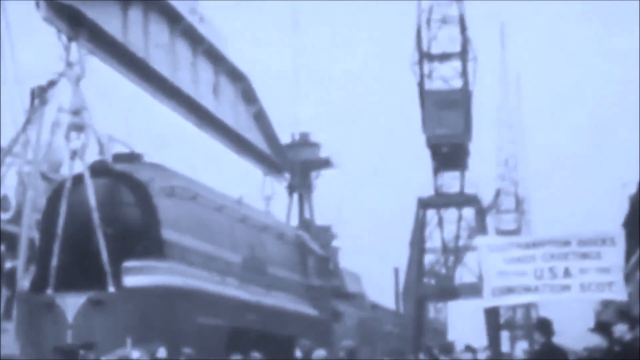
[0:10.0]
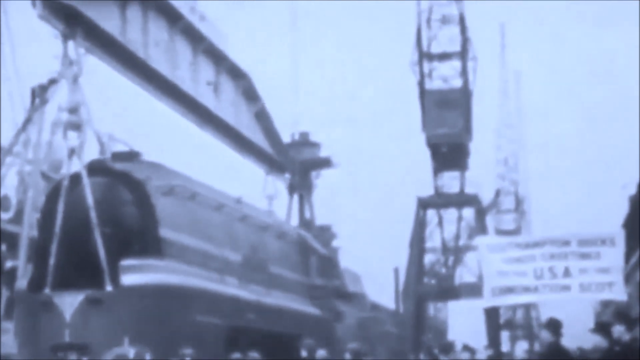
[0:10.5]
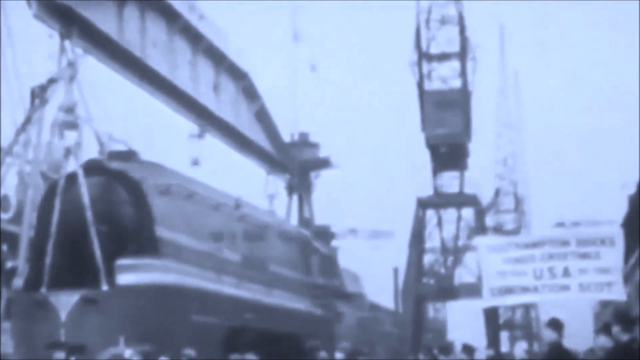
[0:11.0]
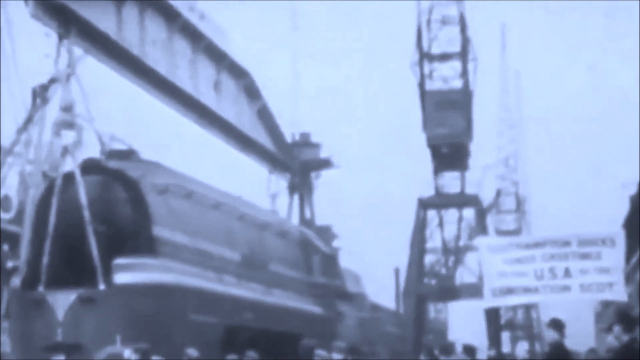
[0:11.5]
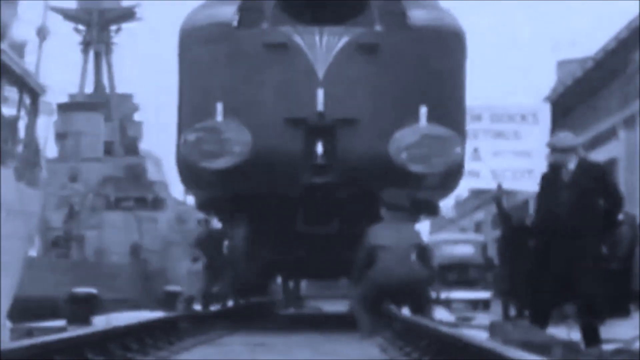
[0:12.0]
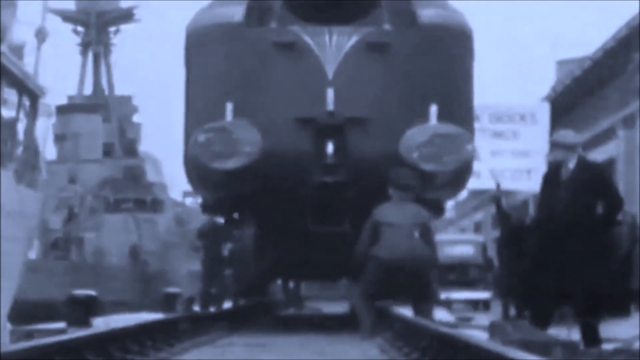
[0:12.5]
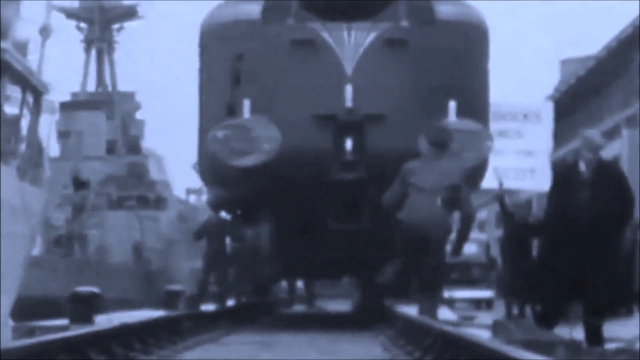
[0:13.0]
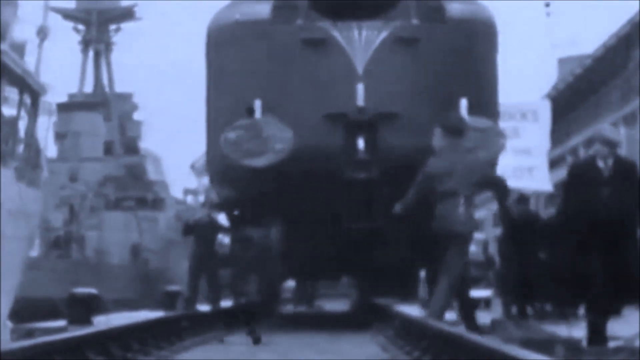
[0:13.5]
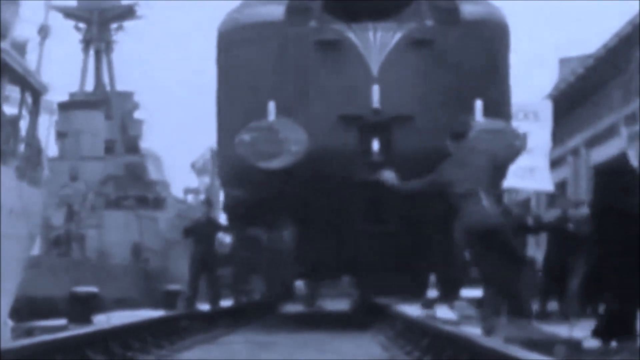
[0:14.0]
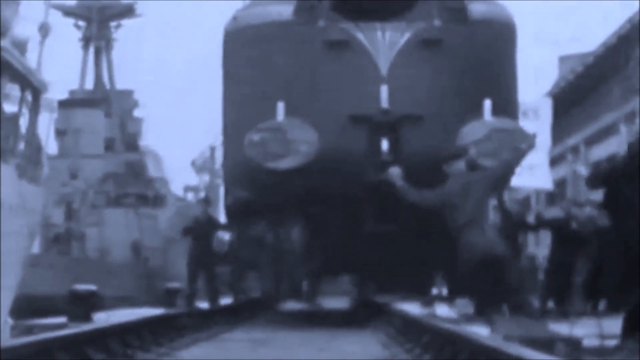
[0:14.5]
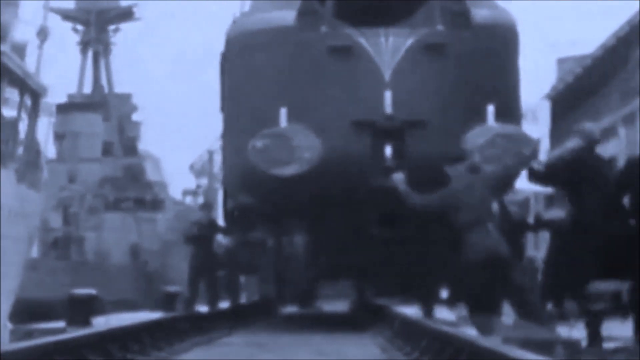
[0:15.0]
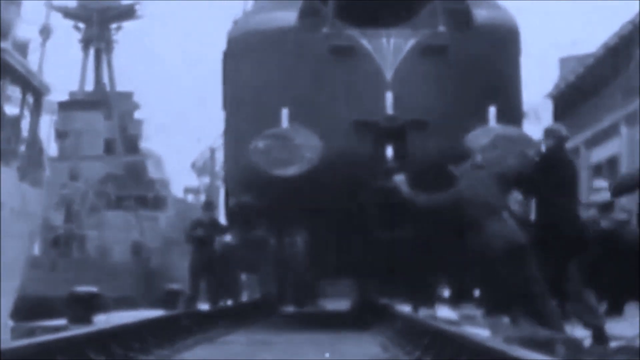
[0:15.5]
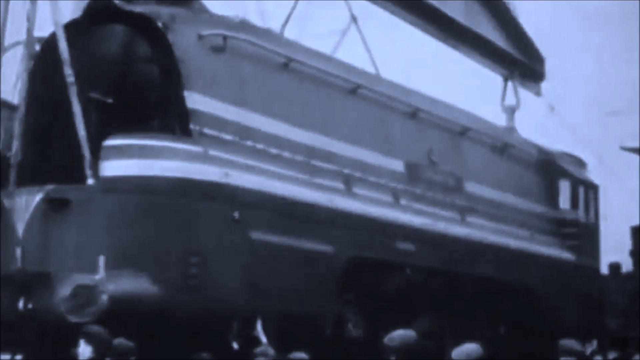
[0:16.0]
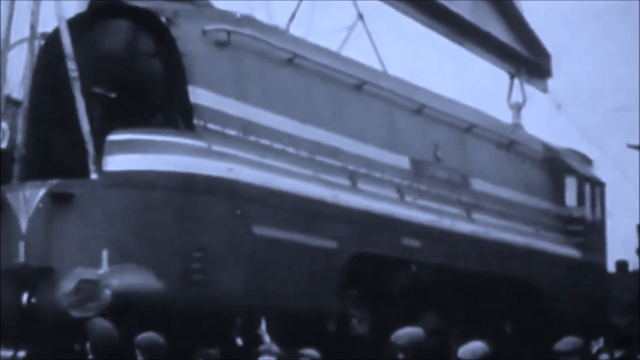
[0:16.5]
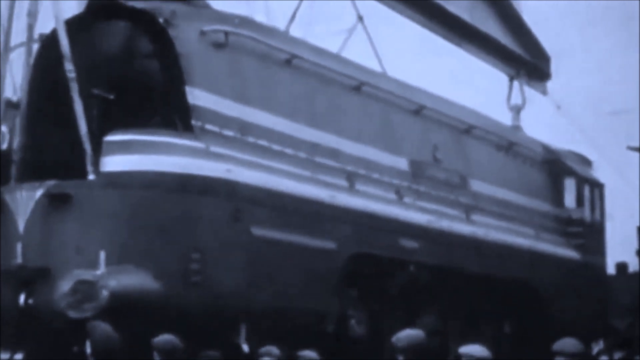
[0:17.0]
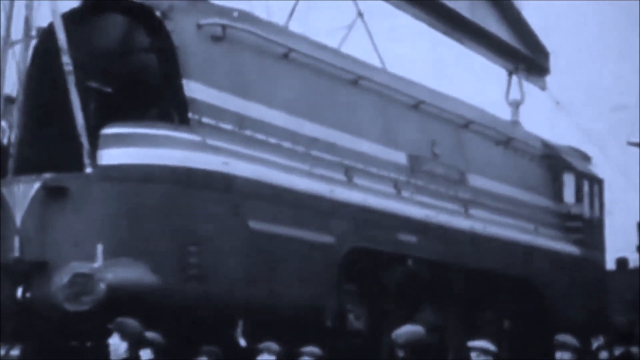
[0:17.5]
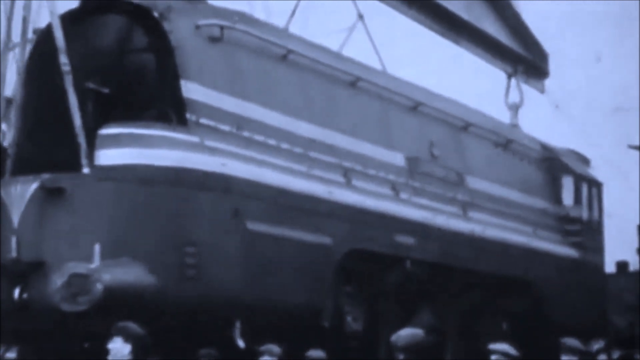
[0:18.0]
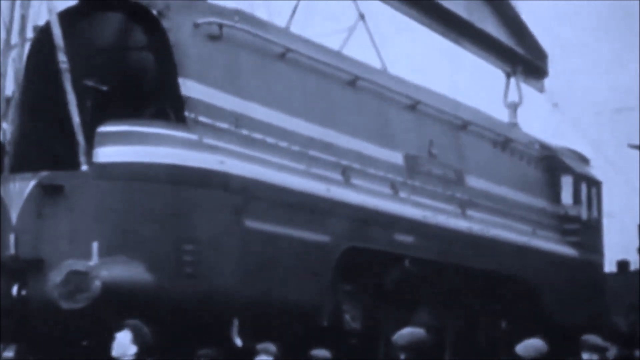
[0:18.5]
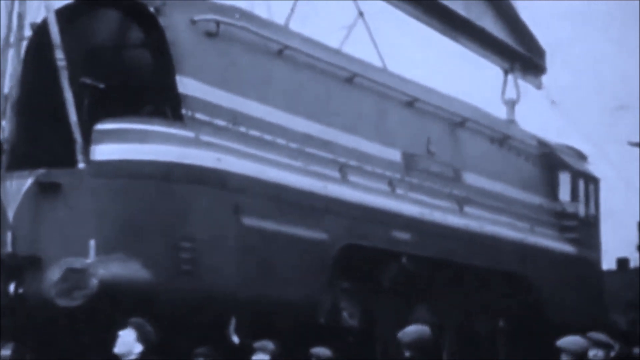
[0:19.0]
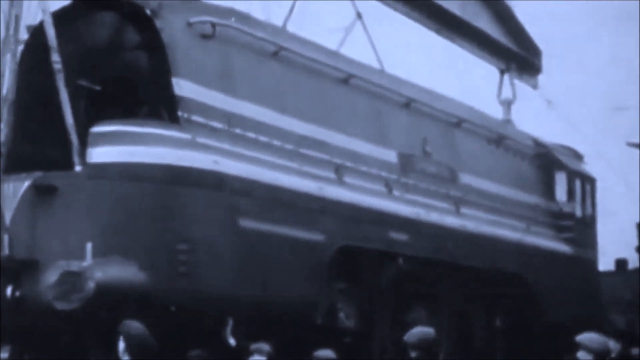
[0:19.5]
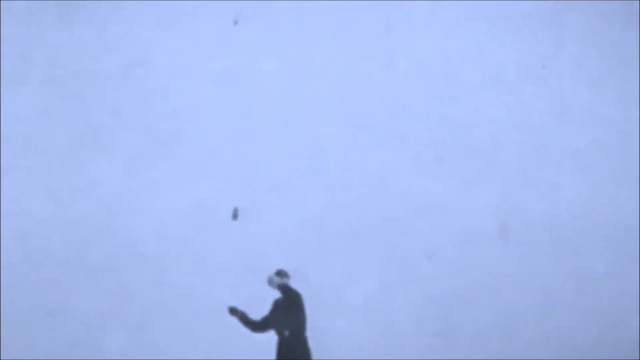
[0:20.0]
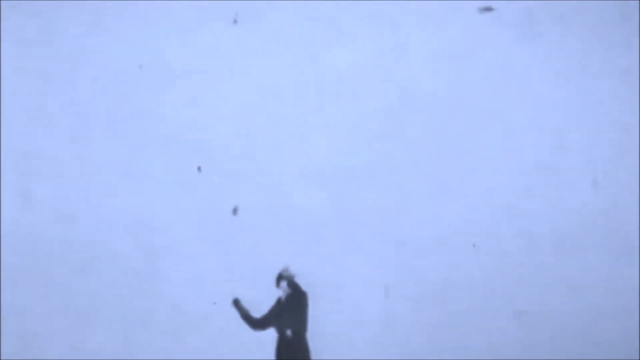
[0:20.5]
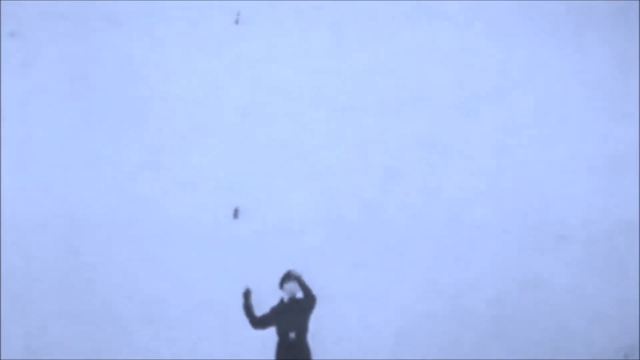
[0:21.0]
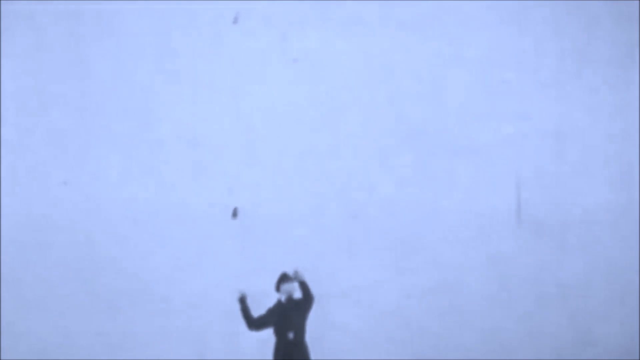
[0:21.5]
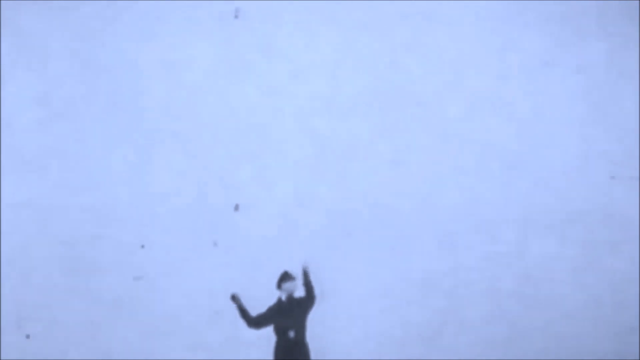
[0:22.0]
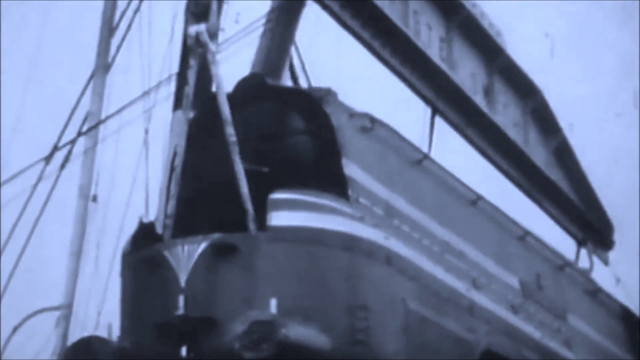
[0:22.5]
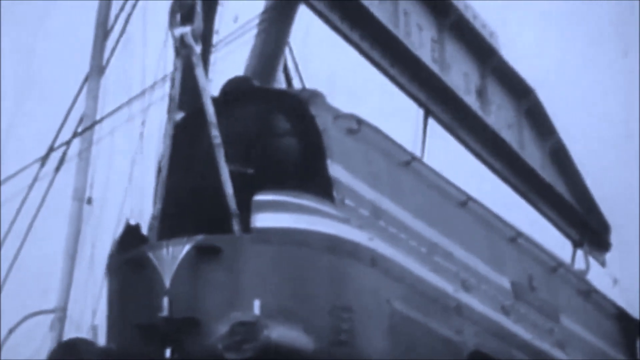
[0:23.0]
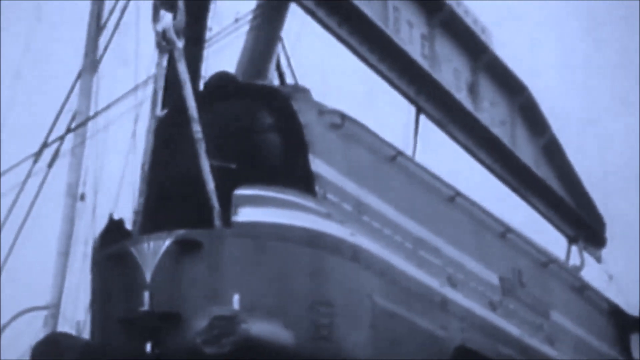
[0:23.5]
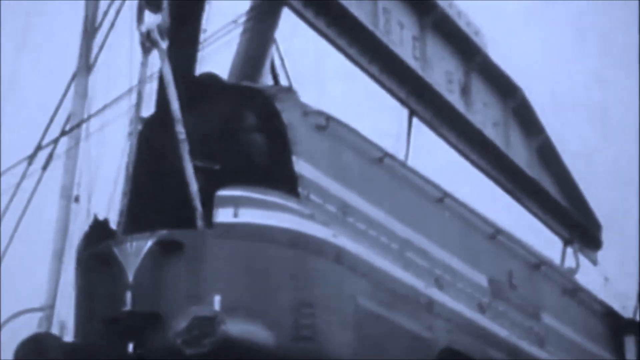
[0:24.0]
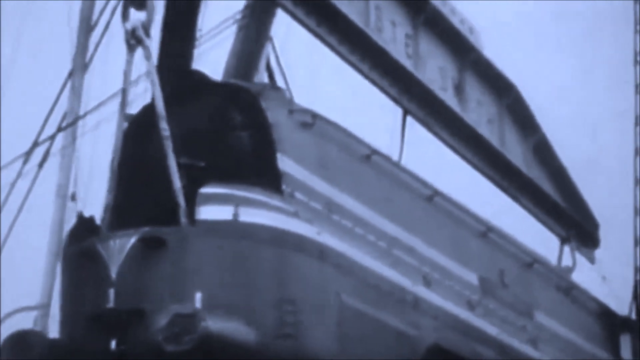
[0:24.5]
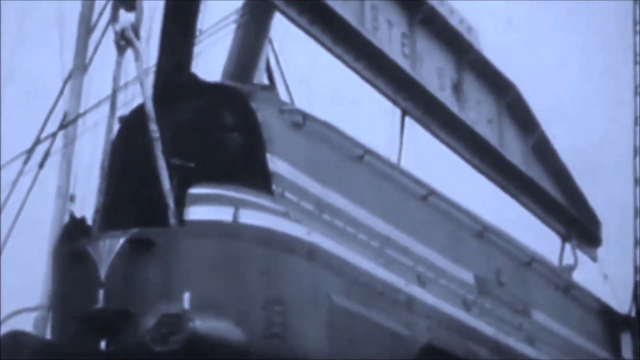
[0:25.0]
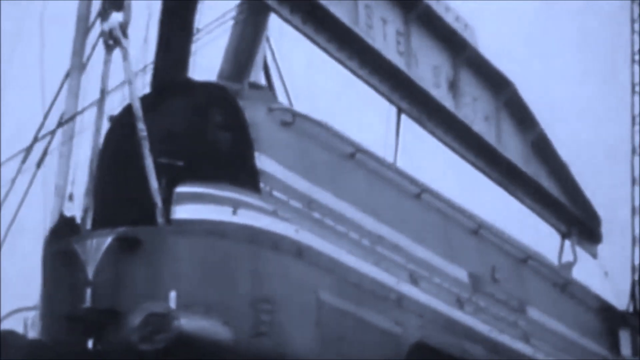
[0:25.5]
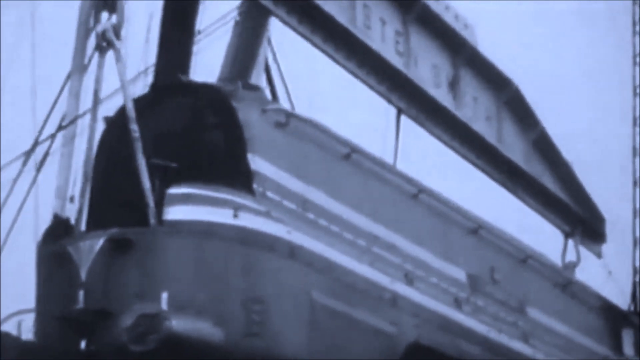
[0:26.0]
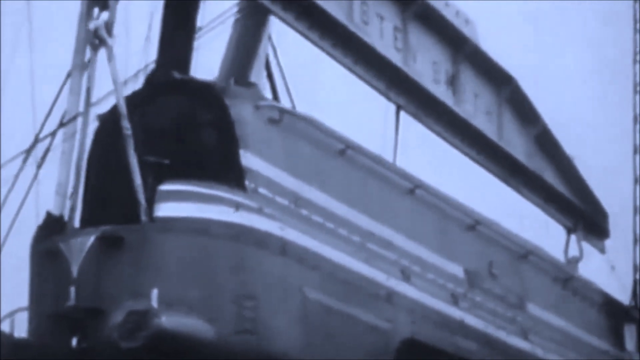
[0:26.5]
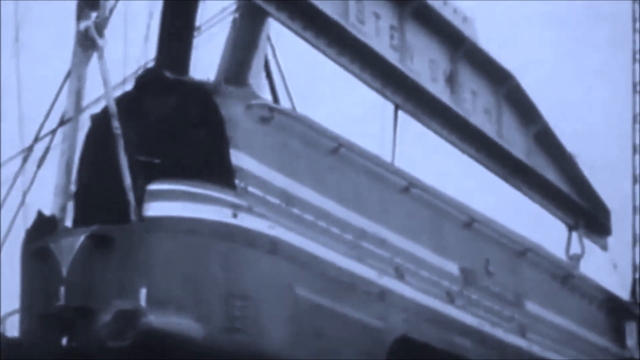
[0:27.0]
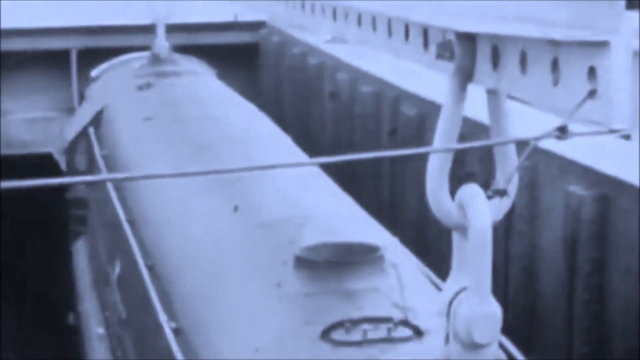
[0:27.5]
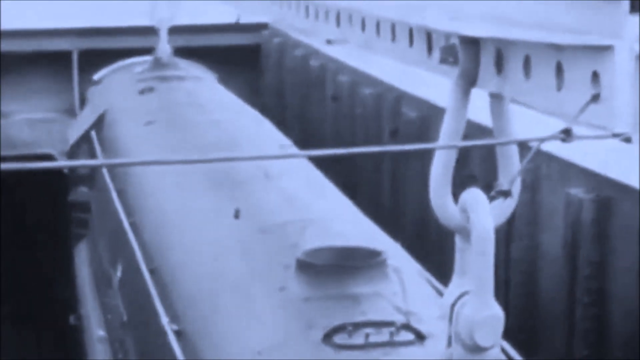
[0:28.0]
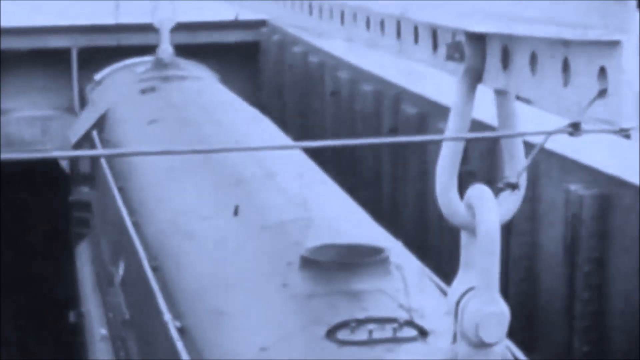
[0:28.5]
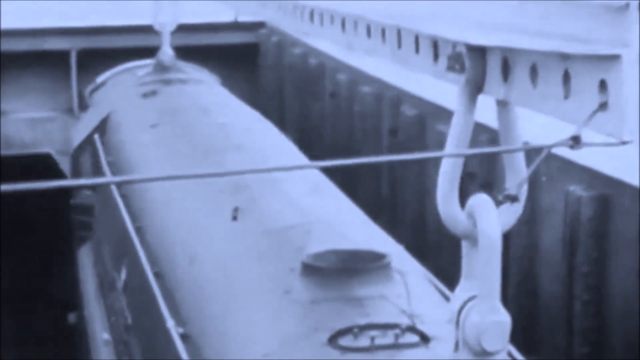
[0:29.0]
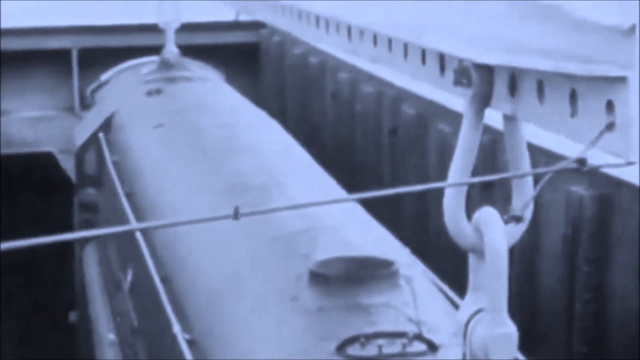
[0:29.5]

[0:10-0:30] The cylindrical object turns out to be a train, apparently a train car, as the pulley lowers it toward railroad tracks. A large number of men on the sides of the tracks wave their arms, helping direct the lowering so the car lands exactly on the rails. One of the workers, a man in black wearing what appears to be a uniform and a hat that looks almost like a conductor's hat, waves his arms in the air, directing the train car safely down onto the track. His facial features cannot be seen; only his dark clothing is visible. Beyond the train is what appears to be a large ship, though the image is very blurry for most of the shot and it is hard to tell.